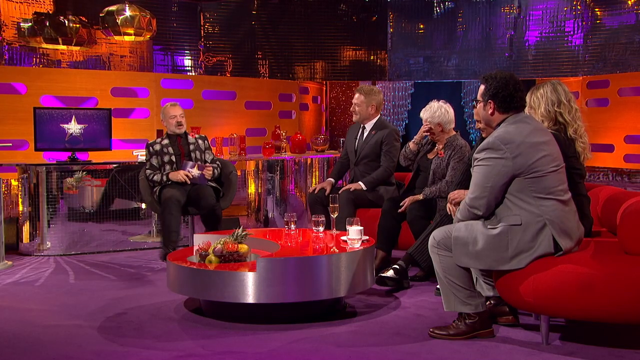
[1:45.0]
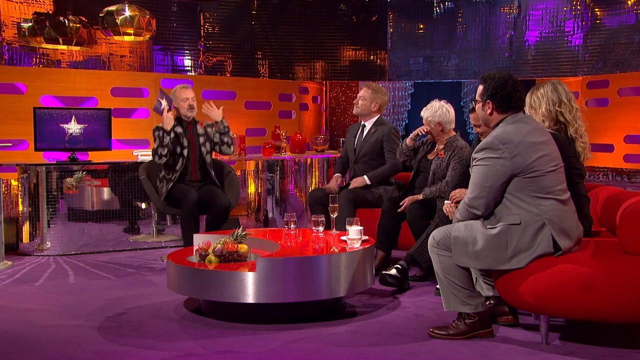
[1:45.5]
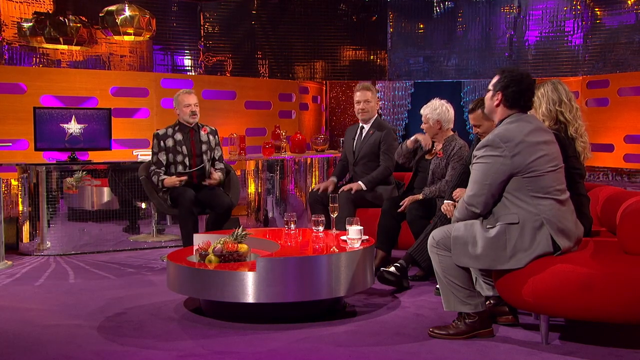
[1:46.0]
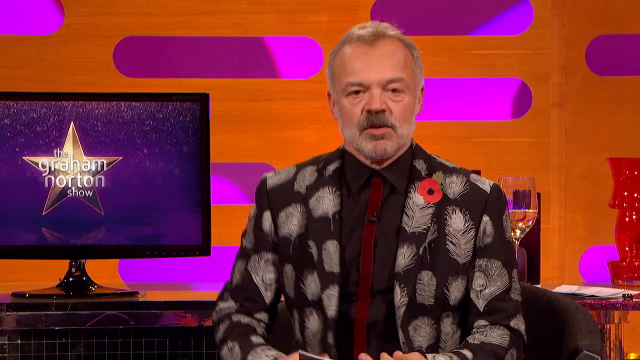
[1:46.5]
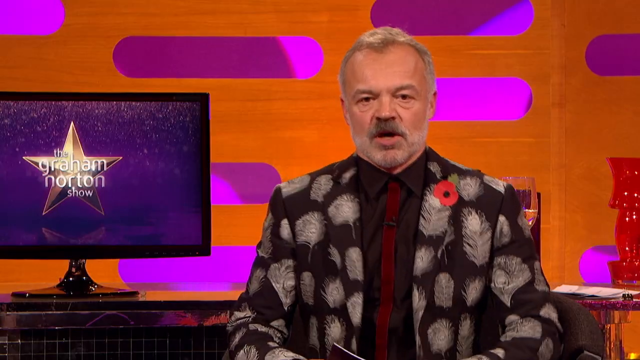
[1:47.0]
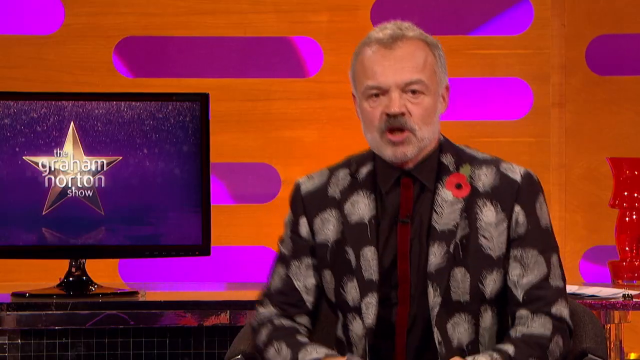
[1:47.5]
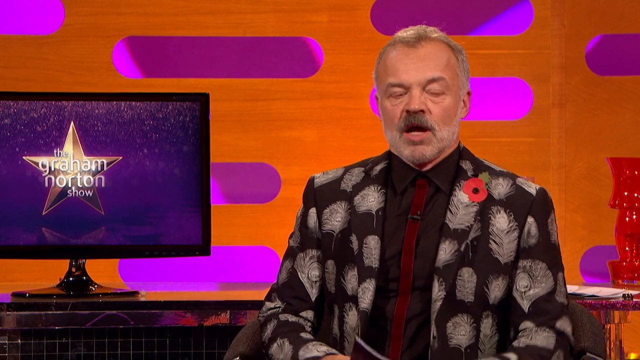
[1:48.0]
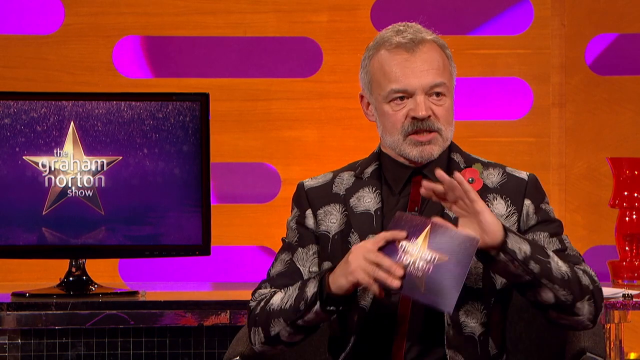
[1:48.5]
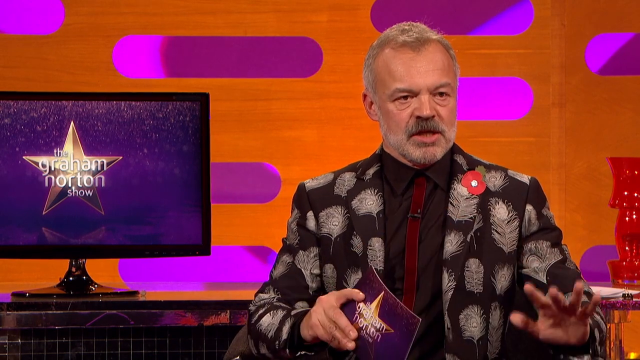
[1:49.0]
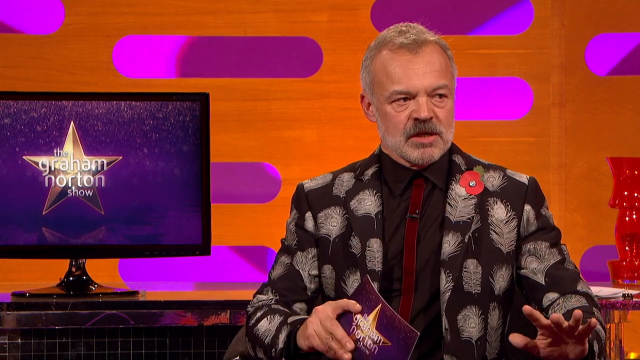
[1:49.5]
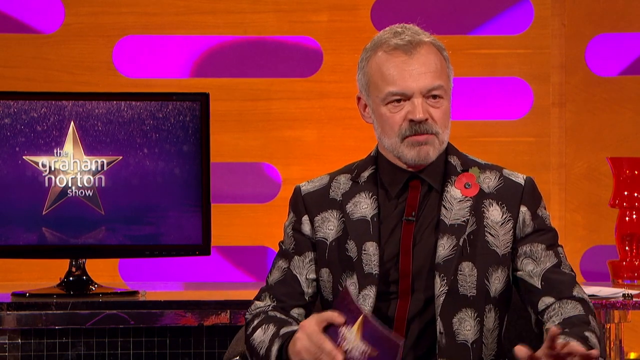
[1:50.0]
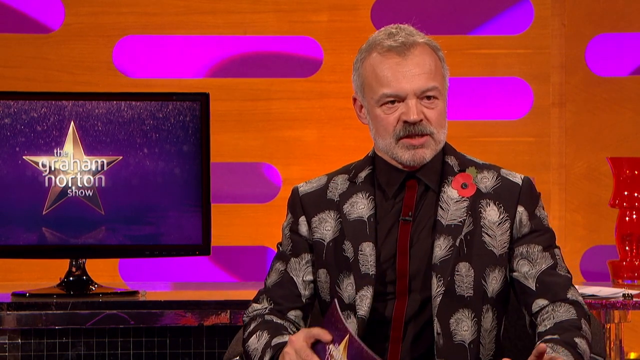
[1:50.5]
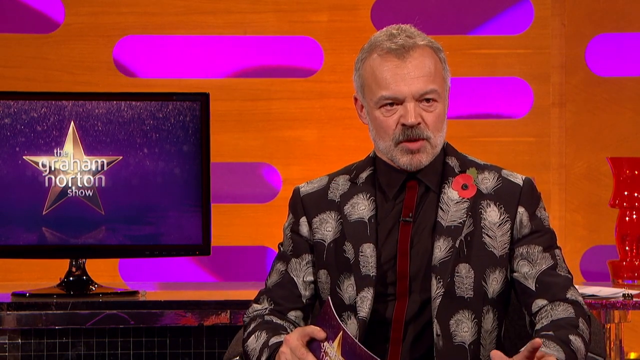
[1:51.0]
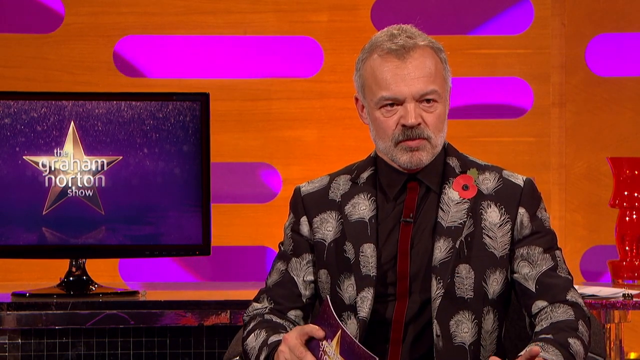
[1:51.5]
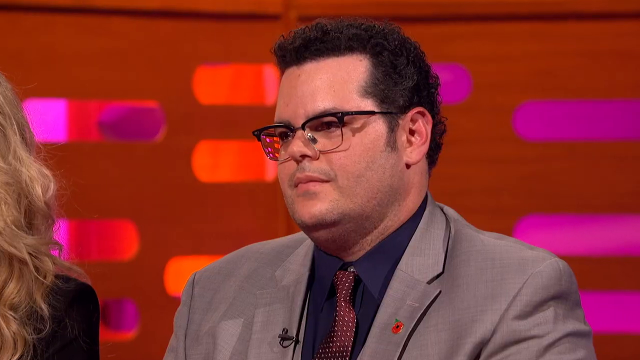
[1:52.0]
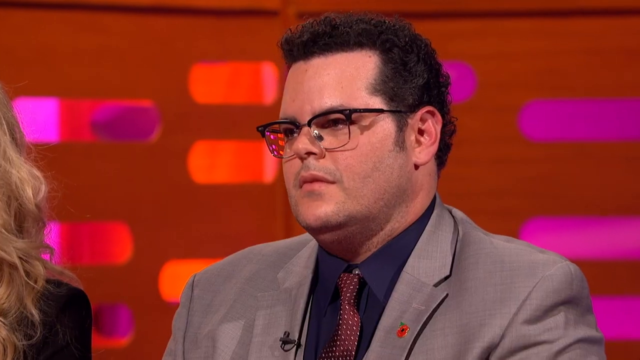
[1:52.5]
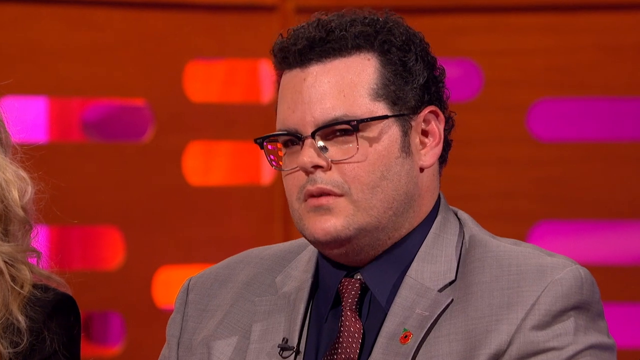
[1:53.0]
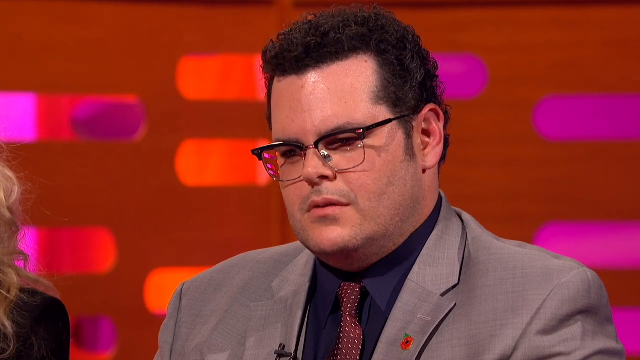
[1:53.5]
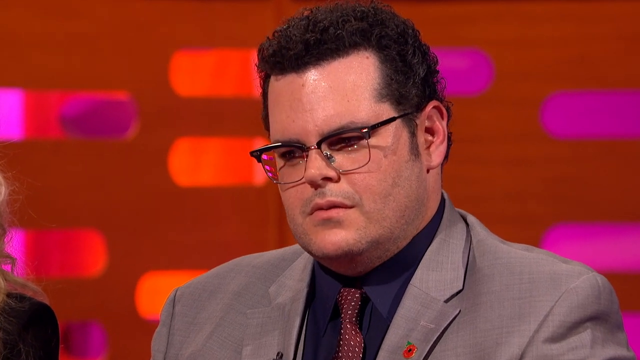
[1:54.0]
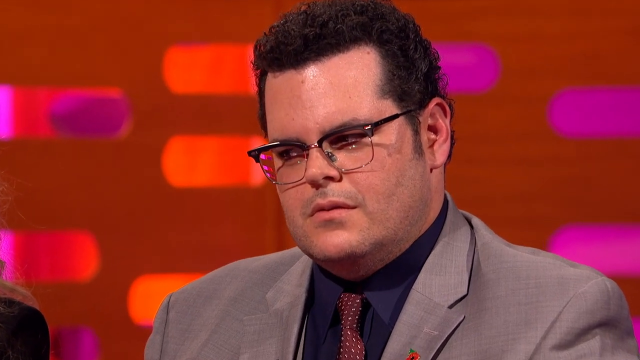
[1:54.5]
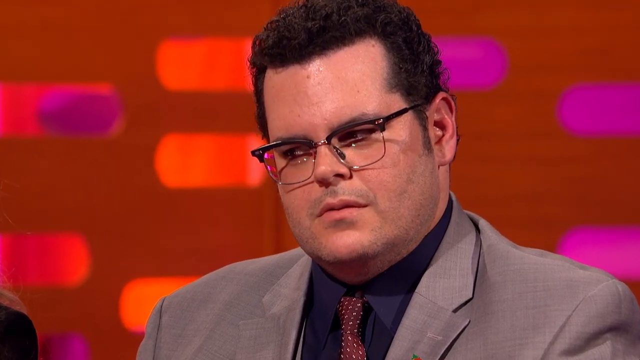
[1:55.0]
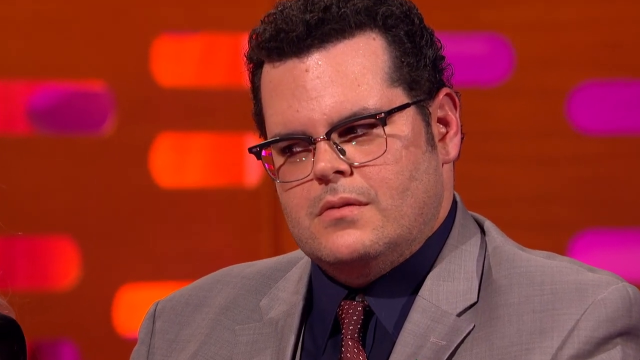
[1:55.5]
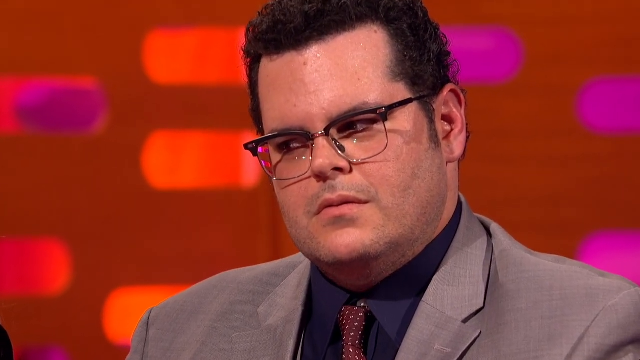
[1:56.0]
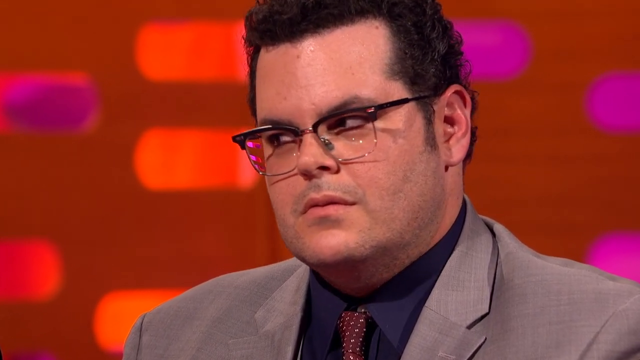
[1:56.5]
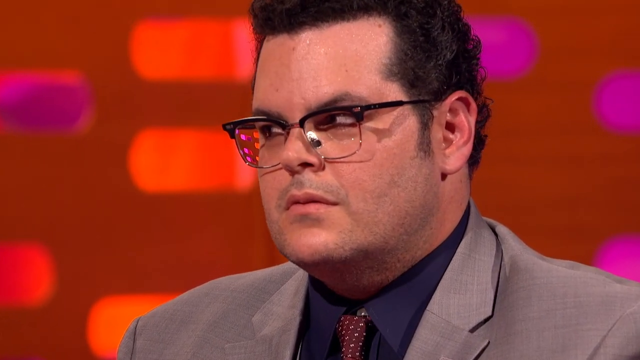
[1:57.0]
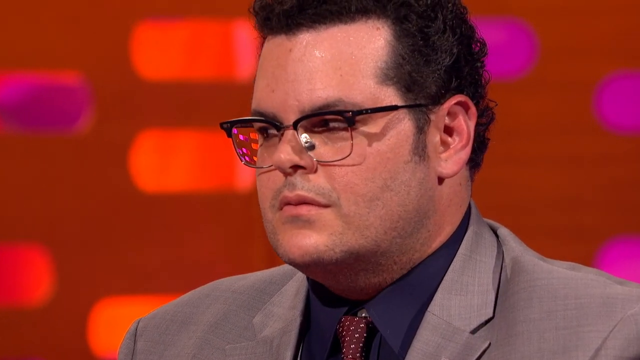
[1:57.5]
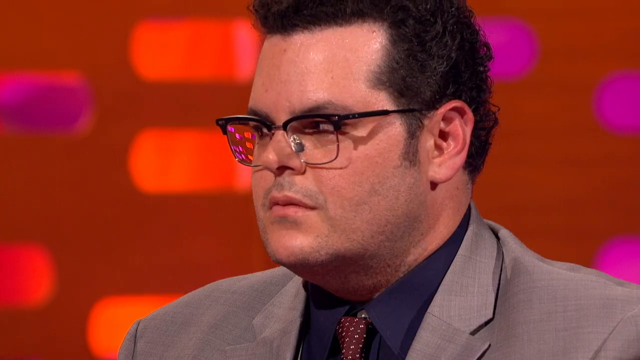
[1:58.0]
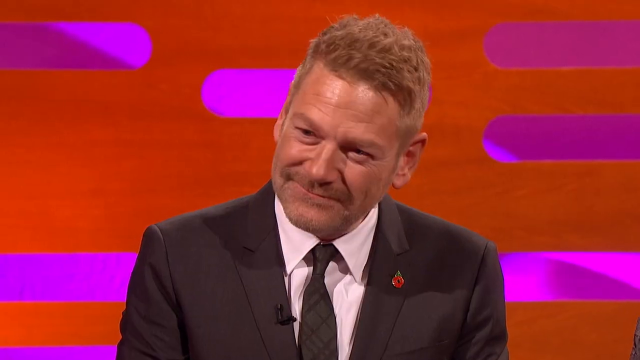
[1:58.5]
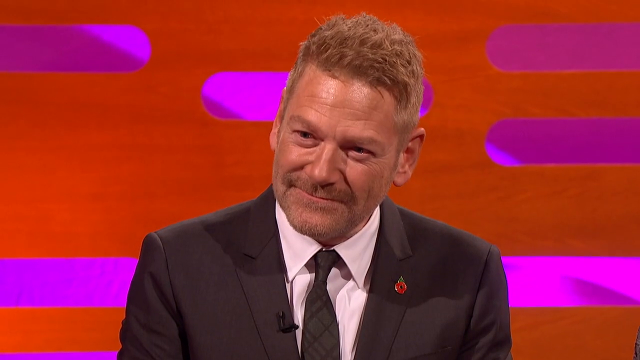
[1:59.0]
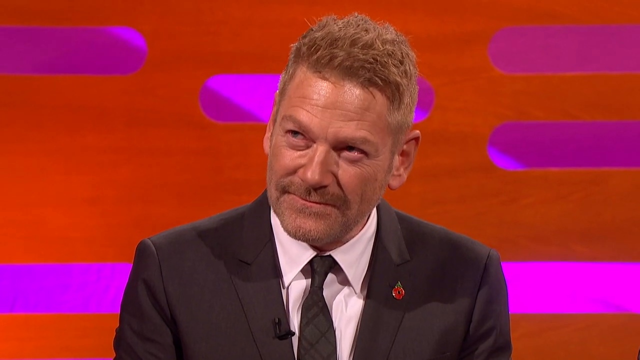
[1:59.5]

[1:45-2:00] The host has both hands up in the air for unclear reasons. He is the only one on screen, fixing his posture and adjusting his seating, then speaks to the group using both hands. The camera shows the man in the gray suit, looking more serious again, zooming in on him slowly as he makes a serious face, twitches his eyebrows, and looks very seriously at the rest of the group. The red-haired man appears, also looking kind of serious. The man in the gray suit seems to be sweating on his forehead. As the camera zooms in, the scene becomes more serious in tone, and the red-haired man's eyes seem to be red, most likely from crying with laughter.